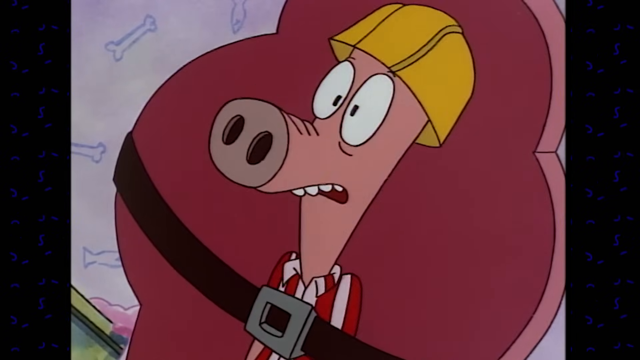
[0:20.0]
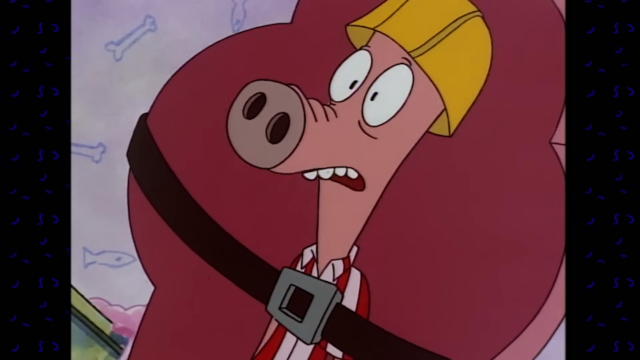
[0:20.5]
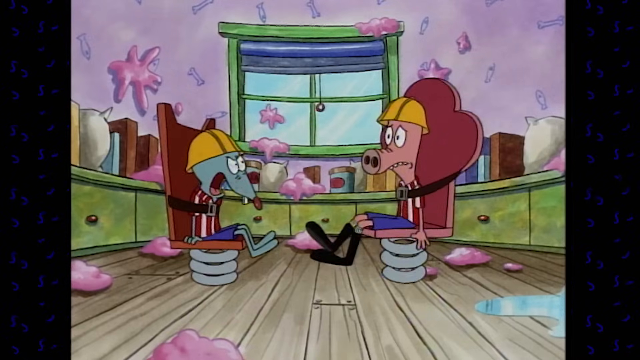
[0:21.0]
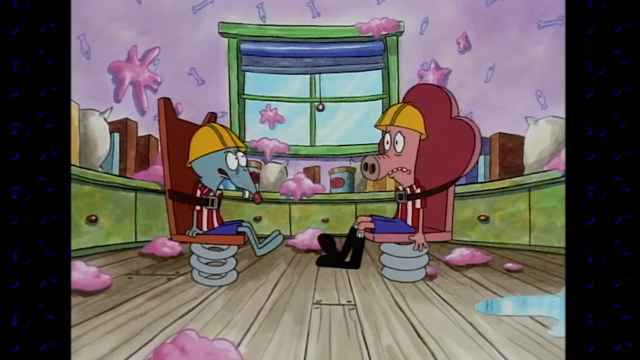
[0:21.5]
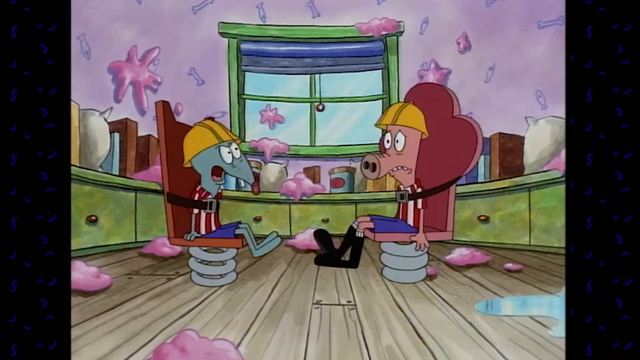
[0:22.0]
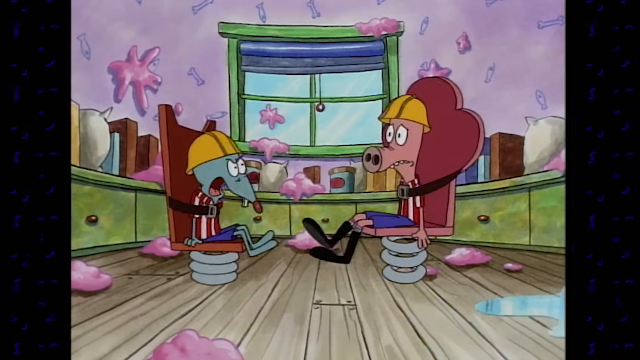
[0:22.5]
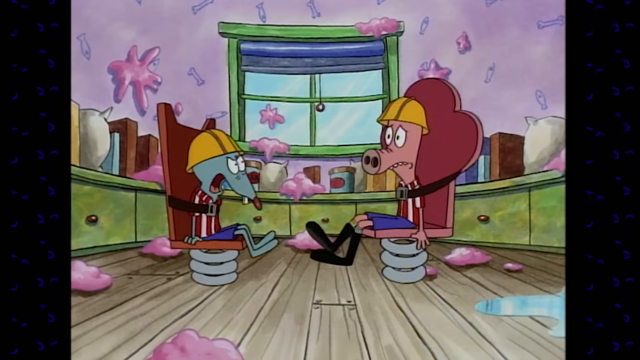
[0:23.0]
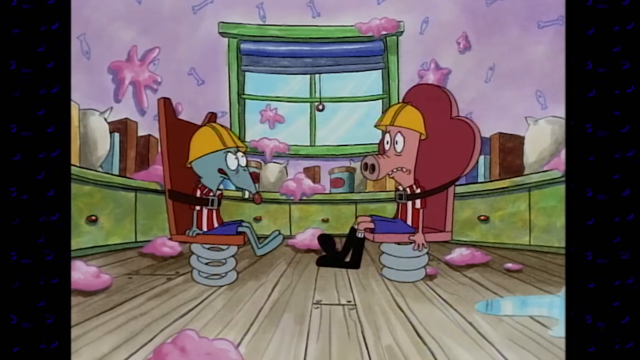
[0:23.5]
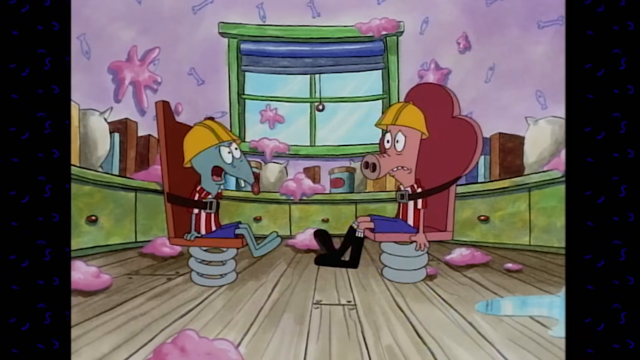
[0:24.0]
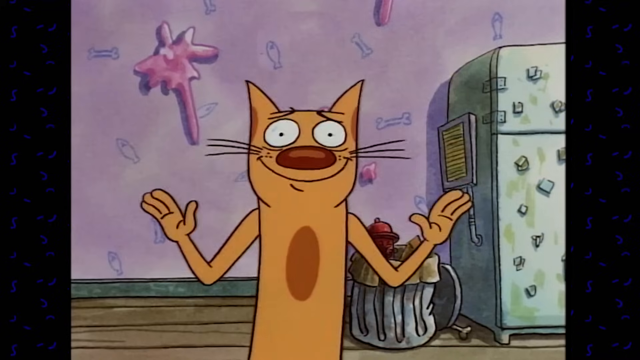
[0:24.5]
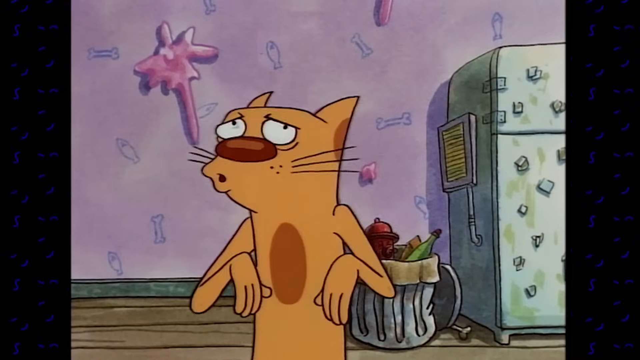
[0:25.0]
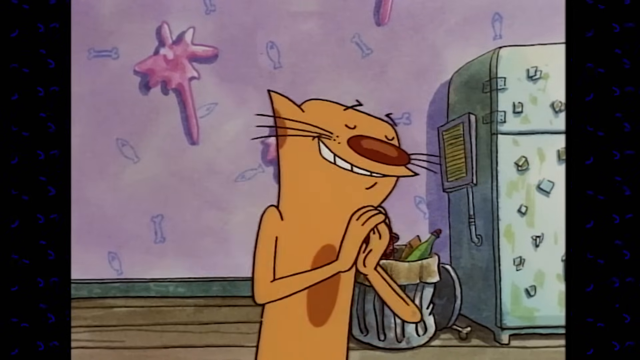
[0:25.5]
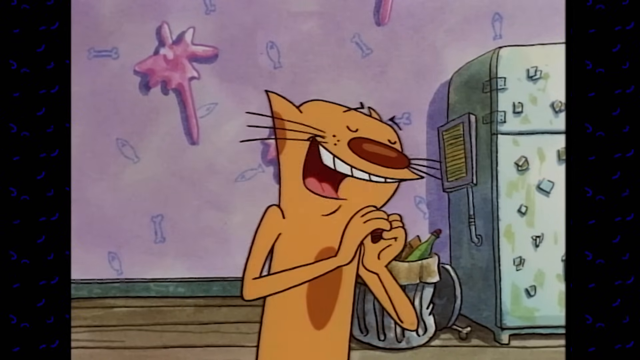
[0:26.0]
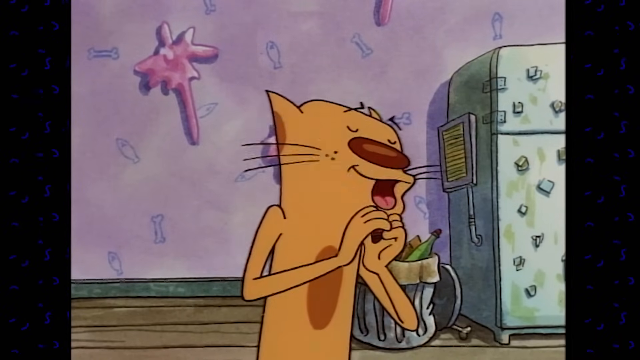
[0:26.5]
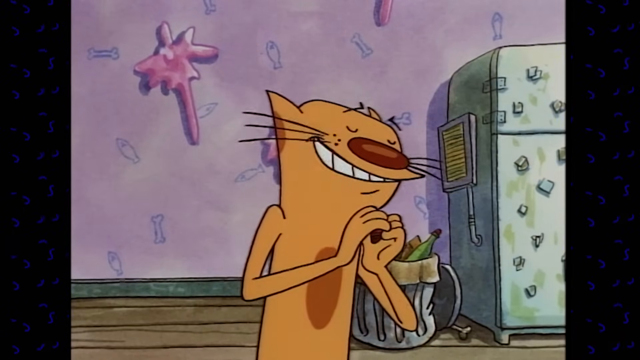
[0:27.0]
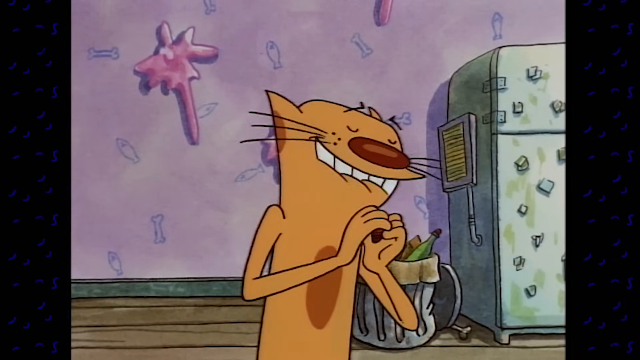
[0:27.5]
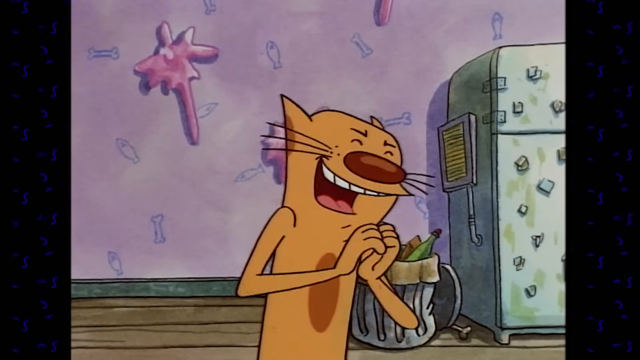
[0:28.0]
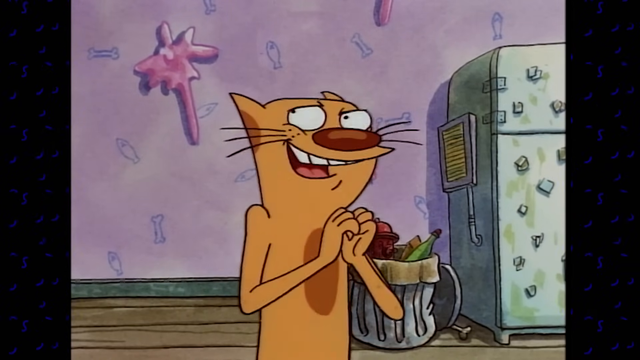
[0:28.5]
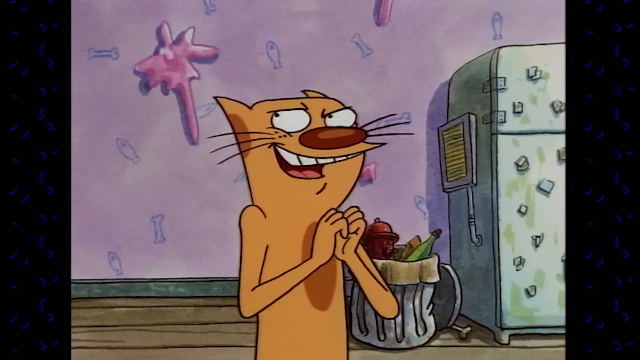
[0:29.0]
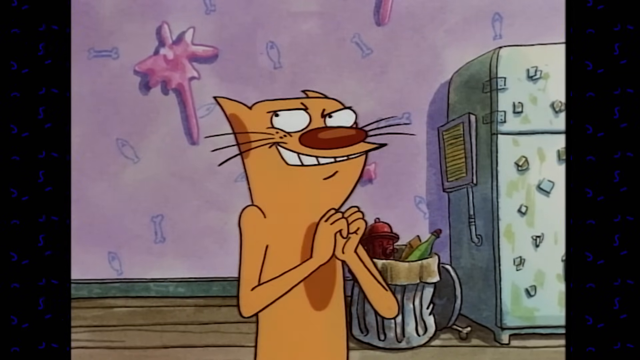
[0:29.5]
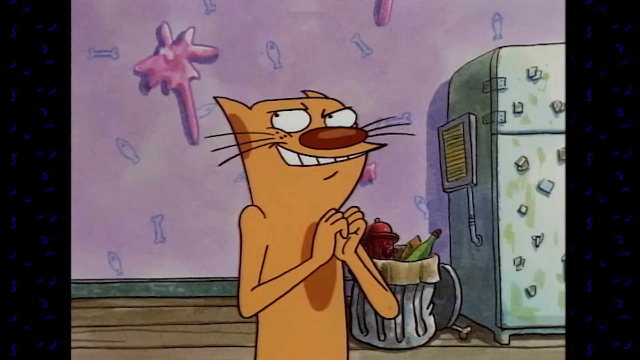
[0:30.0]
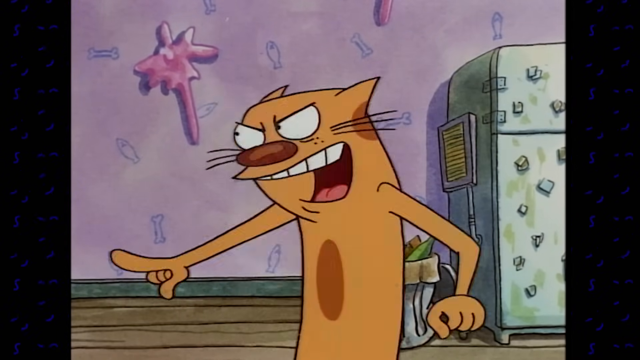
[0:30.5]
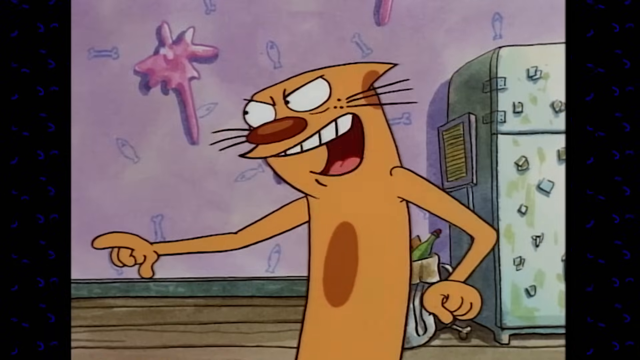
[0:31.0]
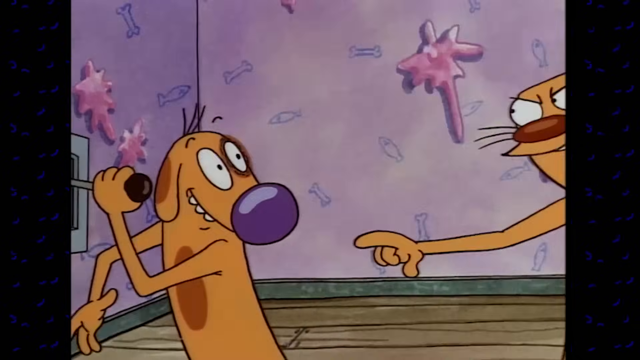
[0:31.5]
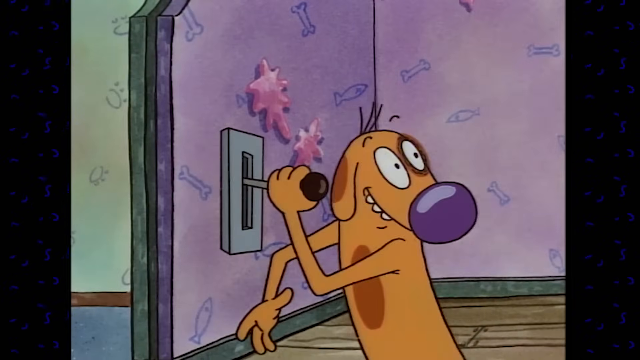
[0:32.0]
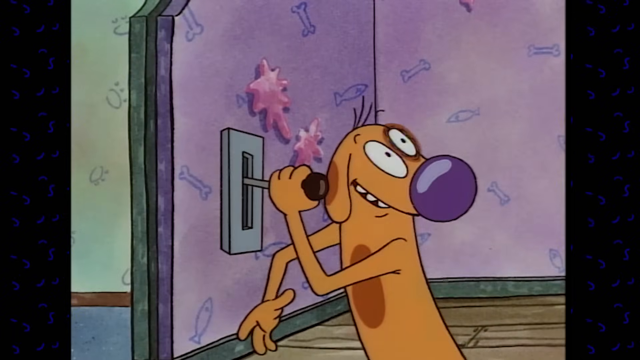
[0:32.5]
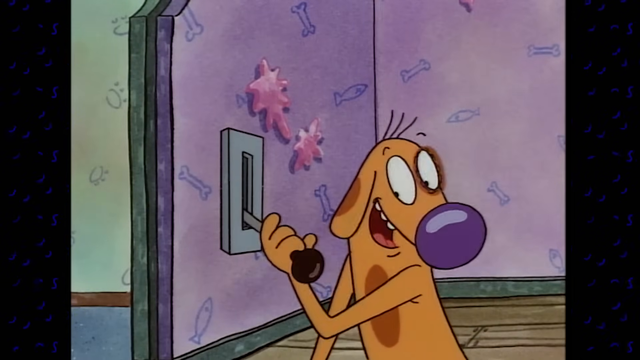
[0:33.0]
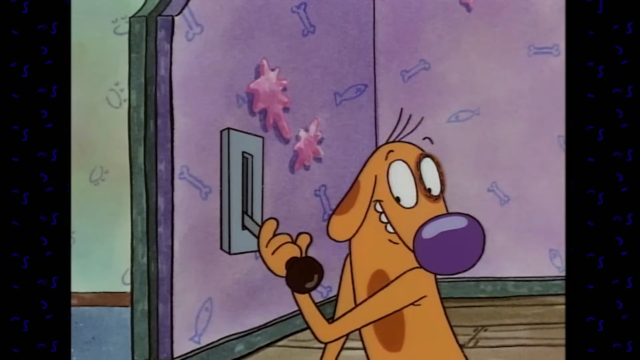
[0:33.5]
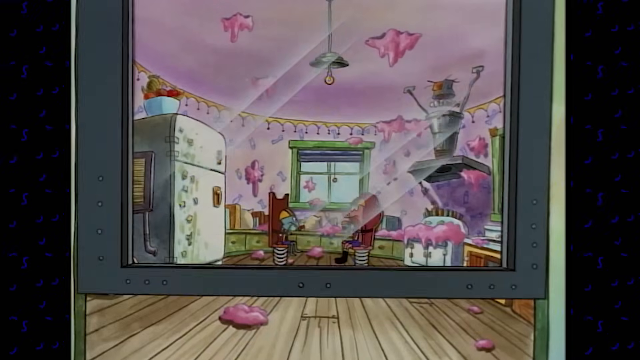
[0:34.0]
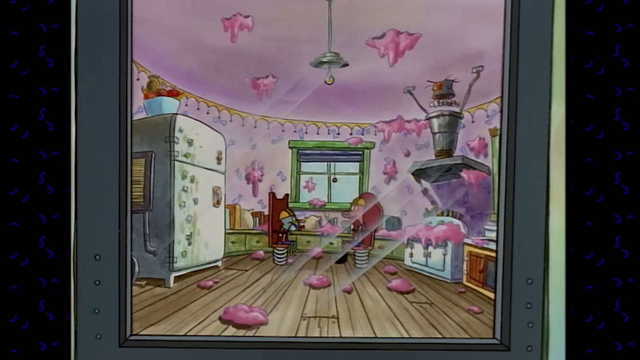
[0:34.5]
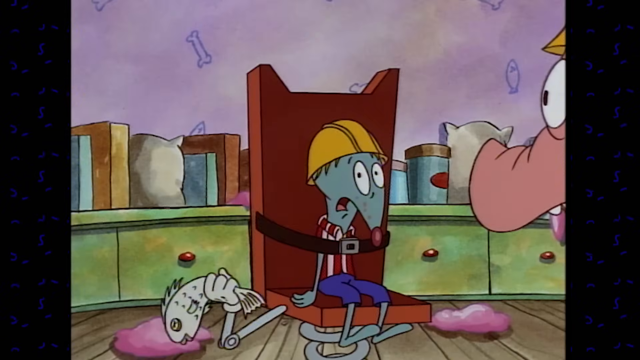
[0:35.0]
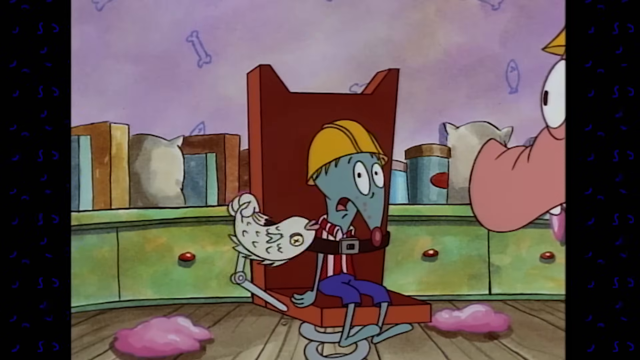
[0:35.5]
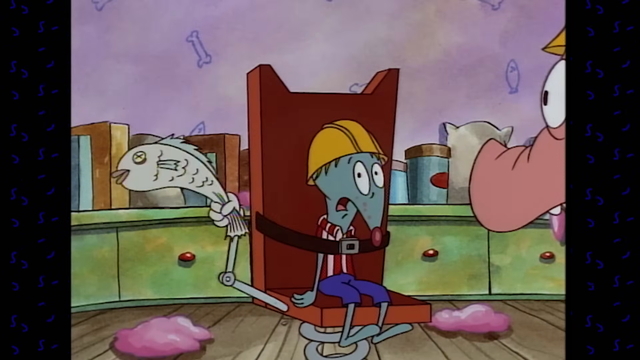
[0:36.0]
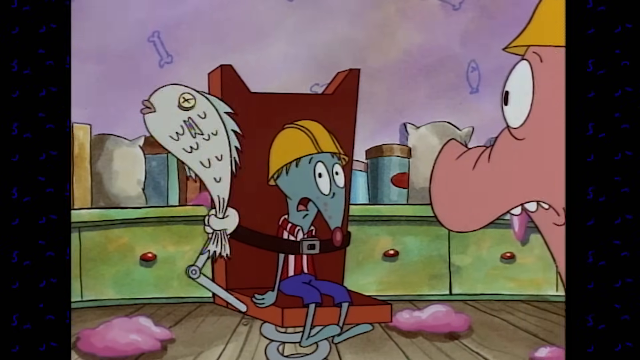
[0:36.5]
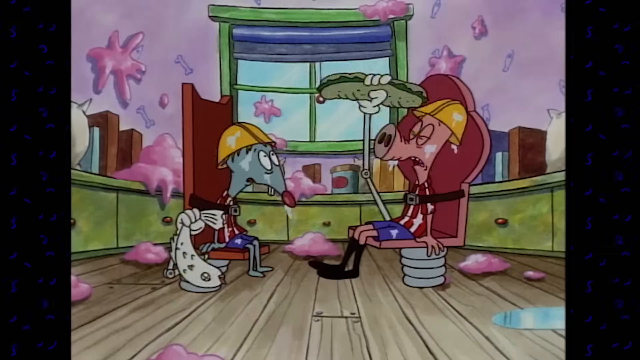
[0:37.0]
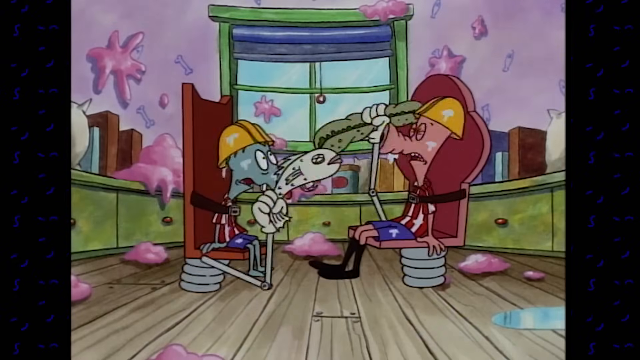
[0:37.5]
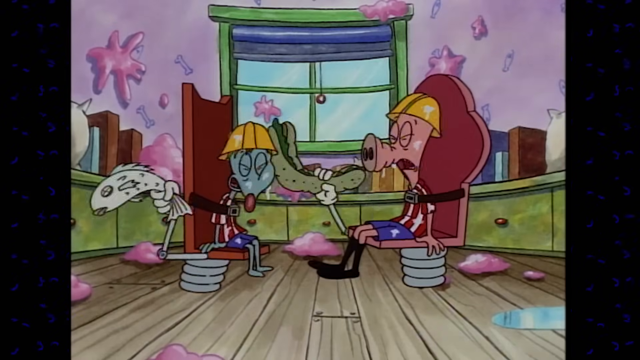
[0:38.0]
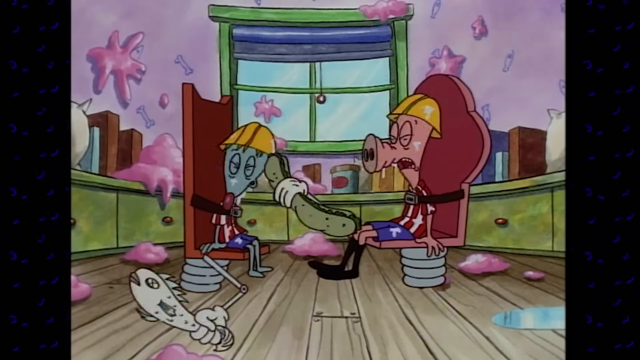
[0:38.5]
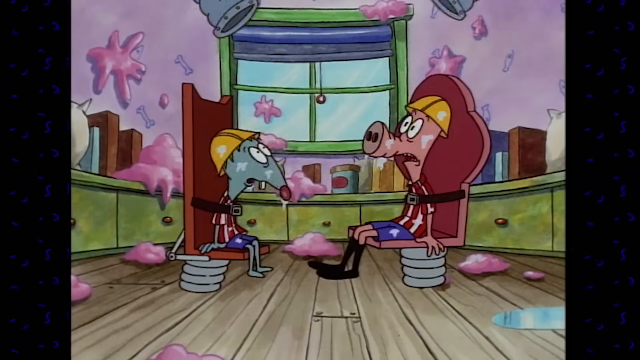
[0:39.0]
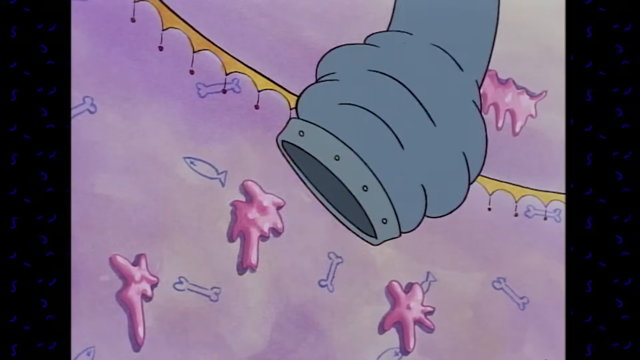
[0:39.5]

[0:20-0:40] The mouse person and the snout person talk to each other while sitting strapped to their spring chairs. A kitchen of some sort is in the background, with pink stuff covering the walls and the floor as if something exploded out of a vessel. The view cuts back to the cat-dog, and the cat gestures to the dog to put the lever in reverse. The dog does so, and a metal arm comes out of one of the chairs holding a gray-looking fish and slaps the mouse right across the face. Apparently the same happens to the snout person, but this metal arm holds a rotten sandwich and slaps the snout person all over the face. The texture of the faces changes.